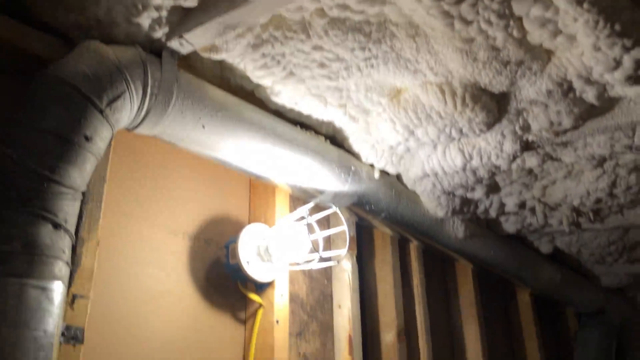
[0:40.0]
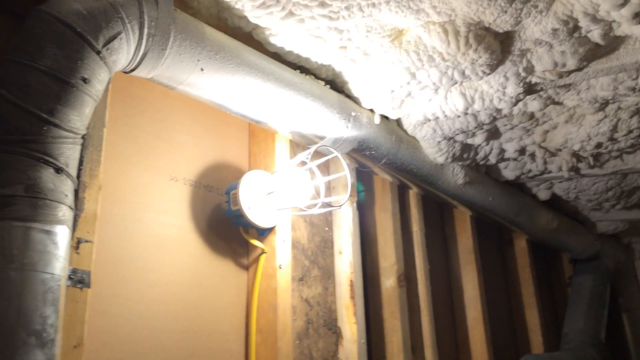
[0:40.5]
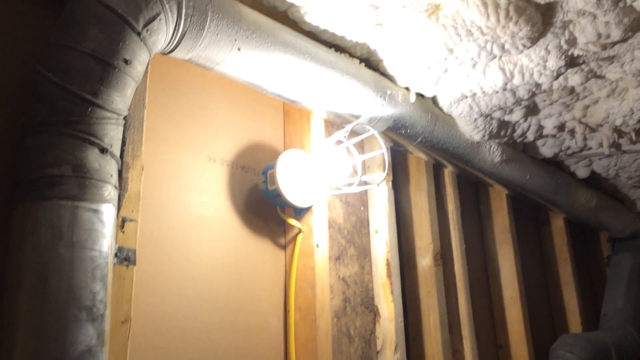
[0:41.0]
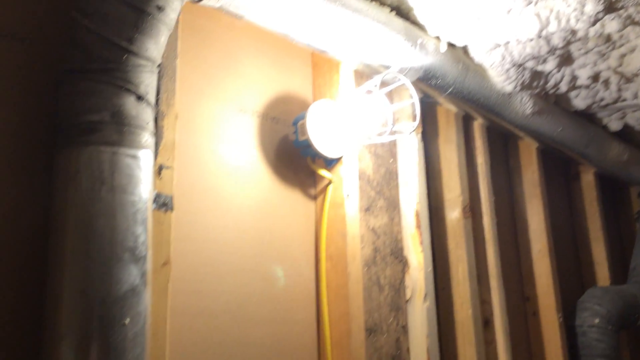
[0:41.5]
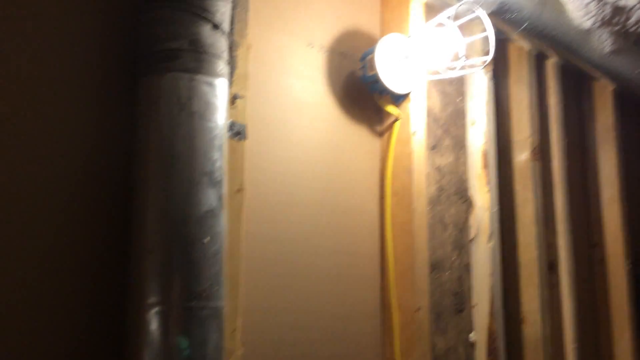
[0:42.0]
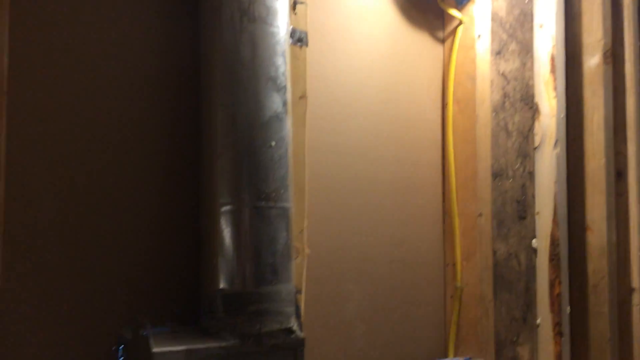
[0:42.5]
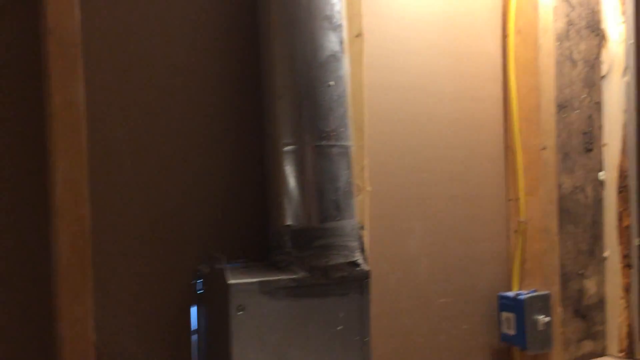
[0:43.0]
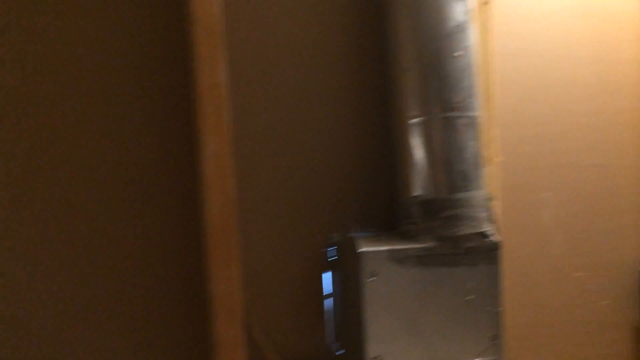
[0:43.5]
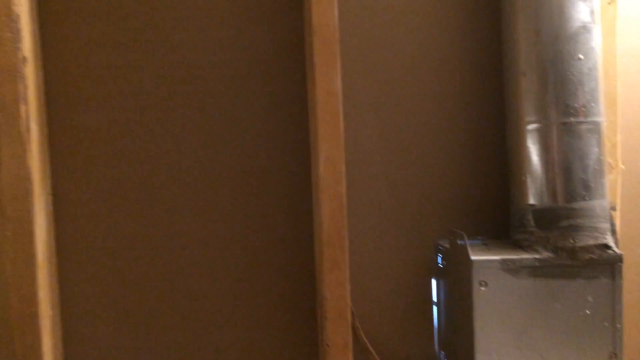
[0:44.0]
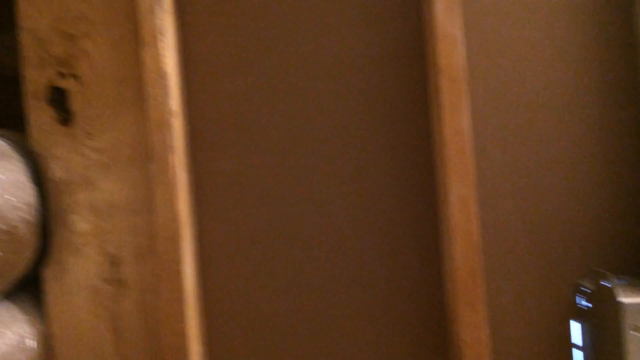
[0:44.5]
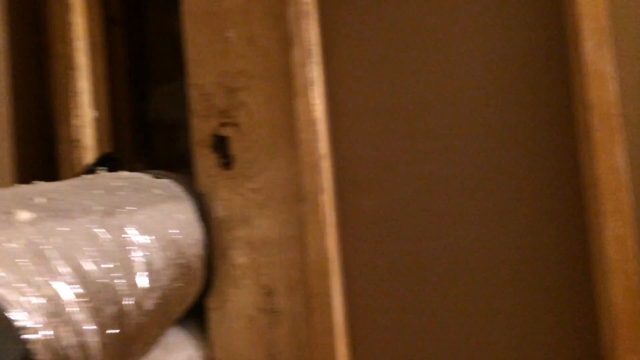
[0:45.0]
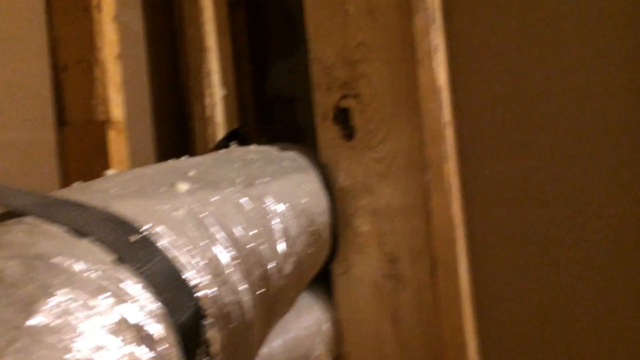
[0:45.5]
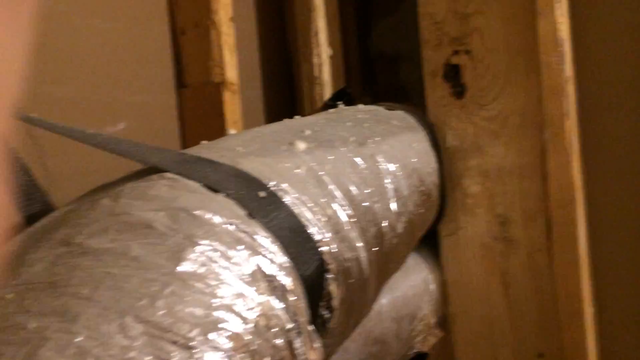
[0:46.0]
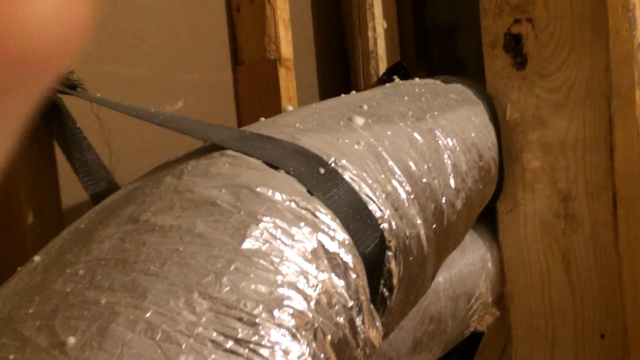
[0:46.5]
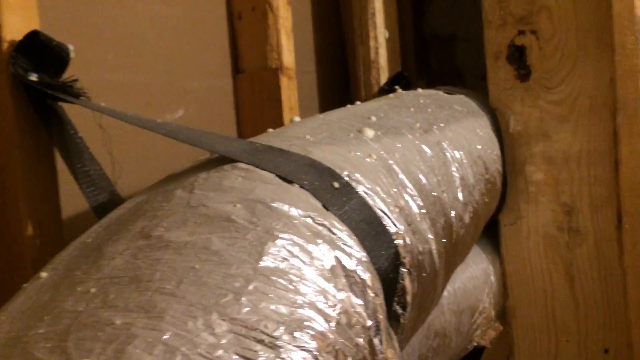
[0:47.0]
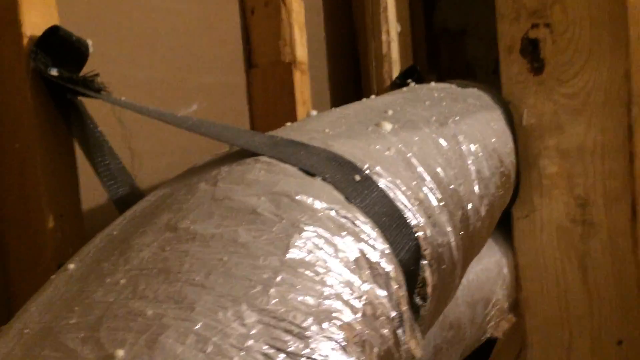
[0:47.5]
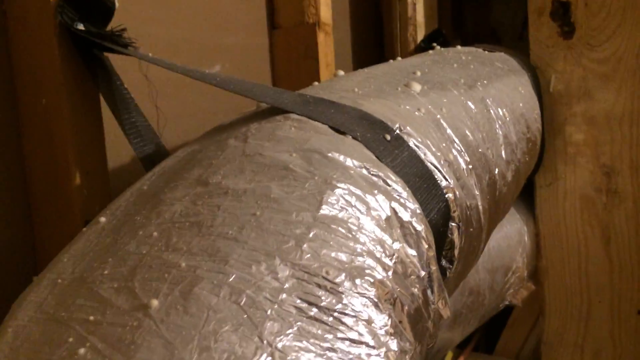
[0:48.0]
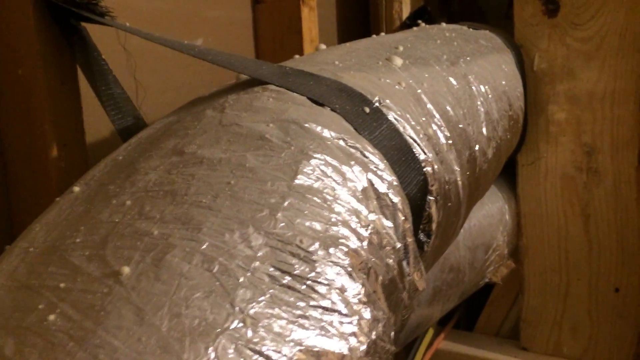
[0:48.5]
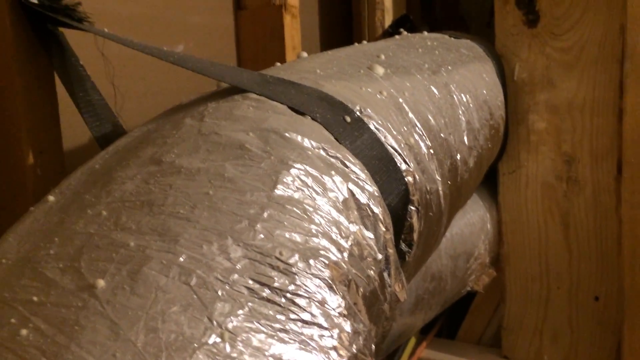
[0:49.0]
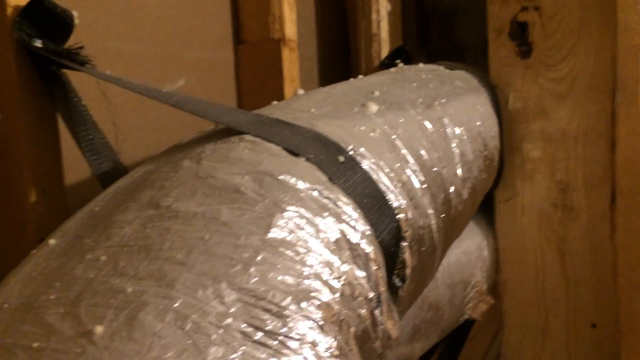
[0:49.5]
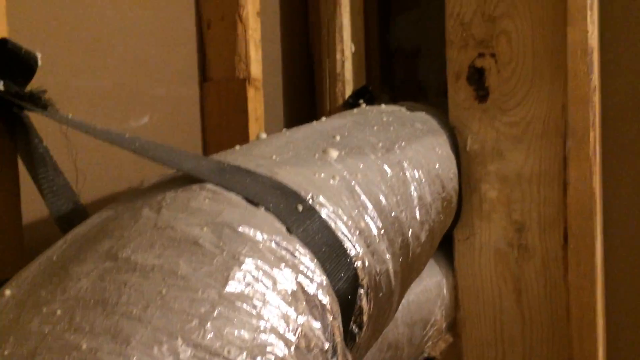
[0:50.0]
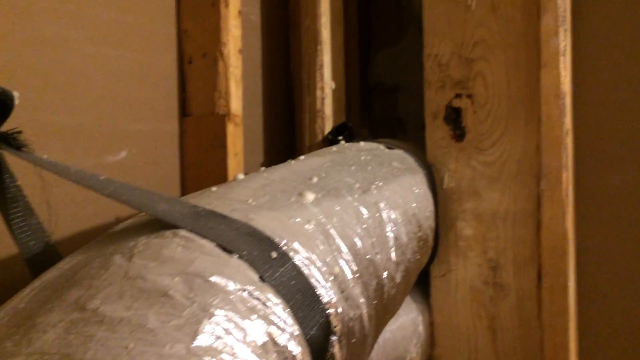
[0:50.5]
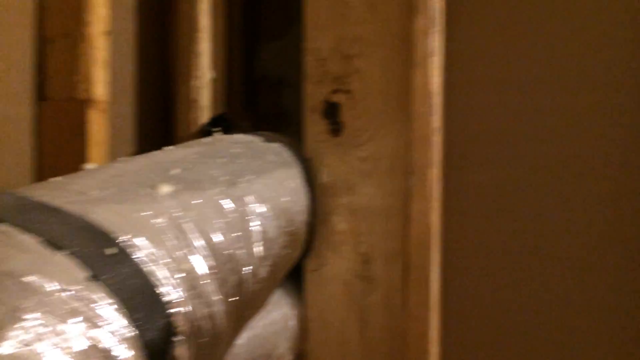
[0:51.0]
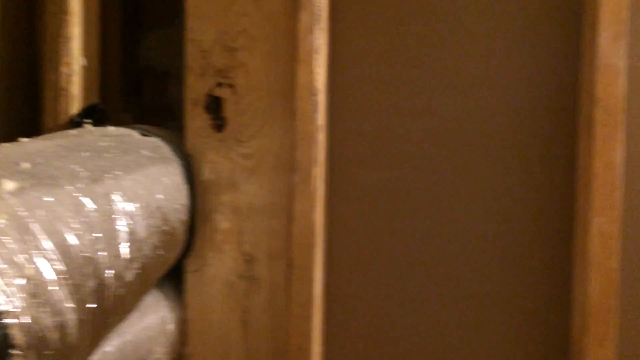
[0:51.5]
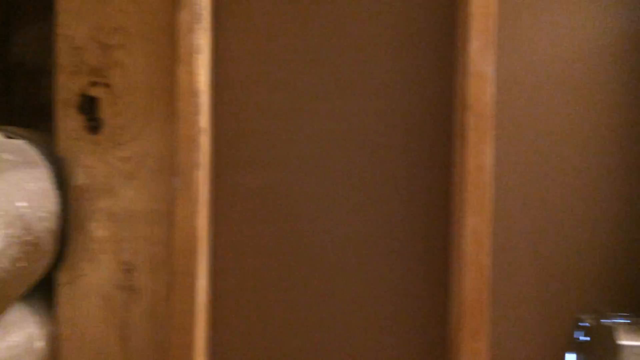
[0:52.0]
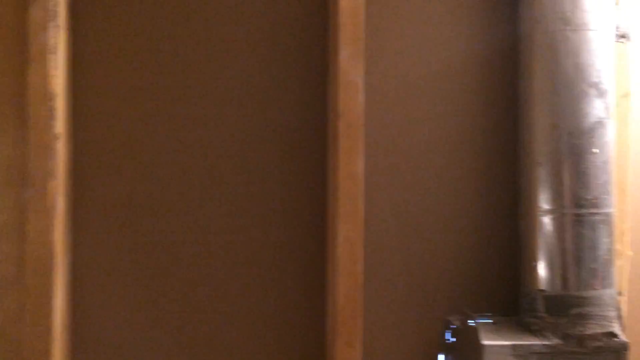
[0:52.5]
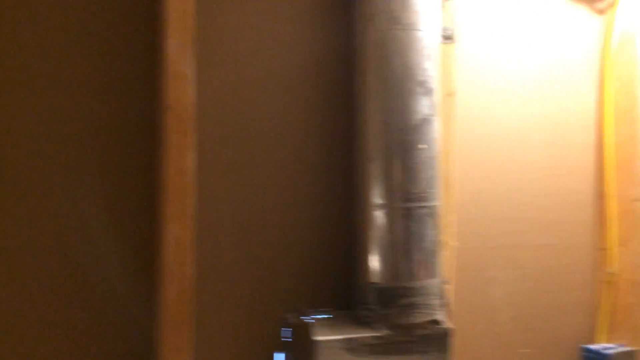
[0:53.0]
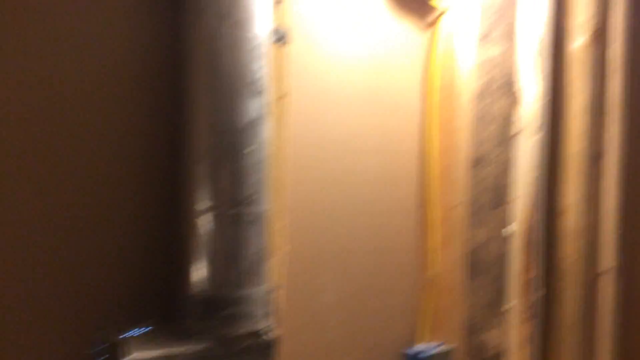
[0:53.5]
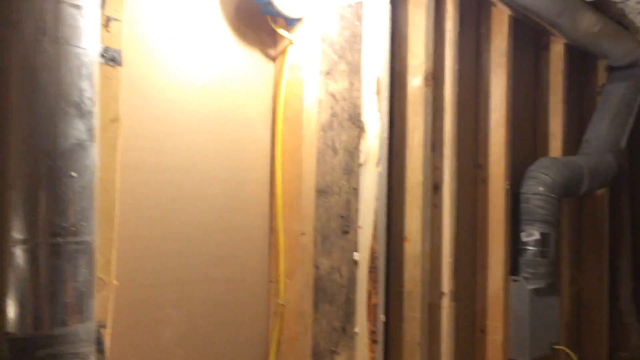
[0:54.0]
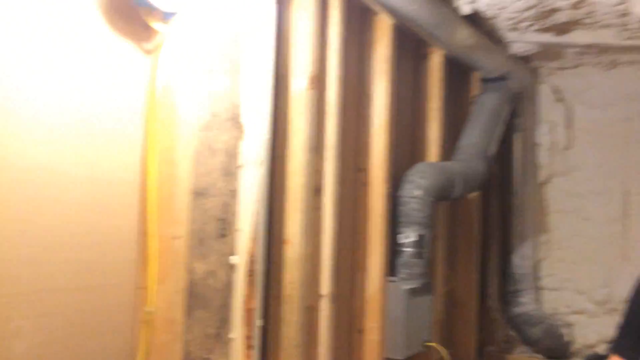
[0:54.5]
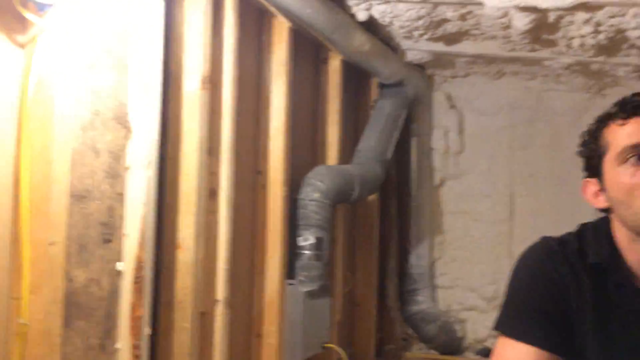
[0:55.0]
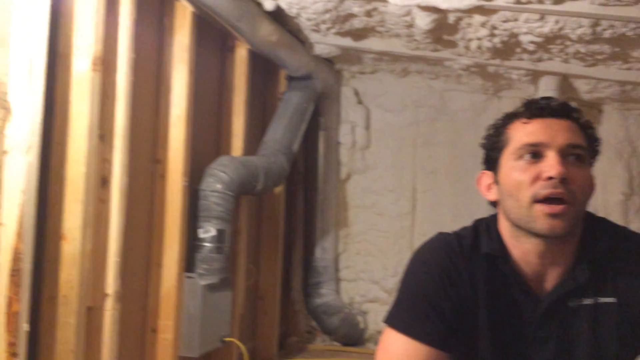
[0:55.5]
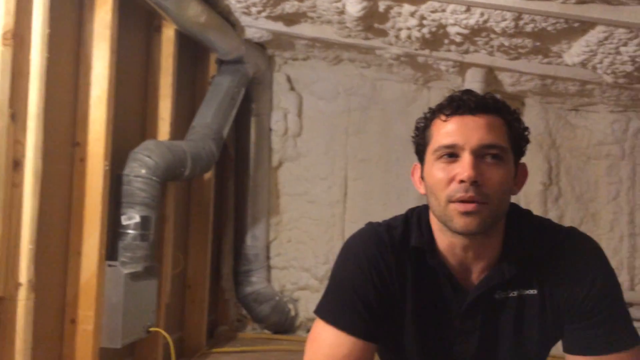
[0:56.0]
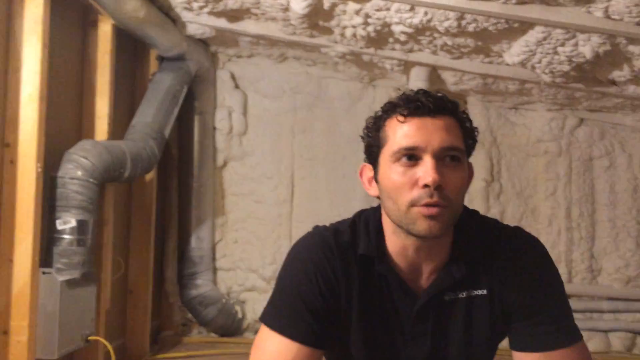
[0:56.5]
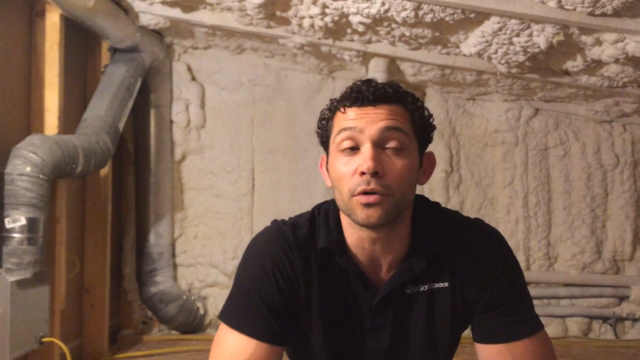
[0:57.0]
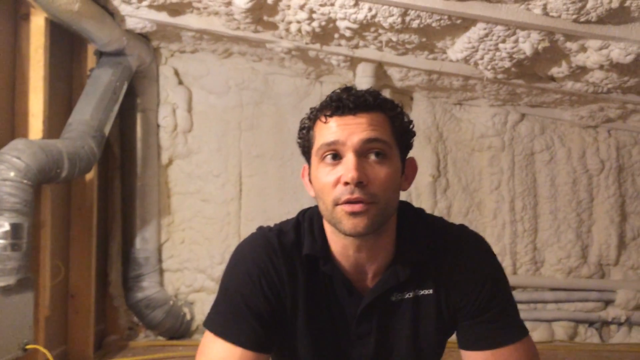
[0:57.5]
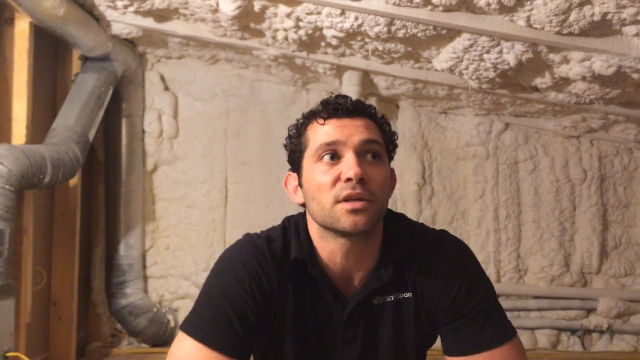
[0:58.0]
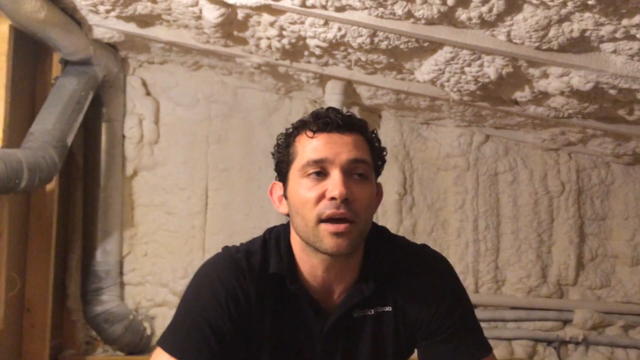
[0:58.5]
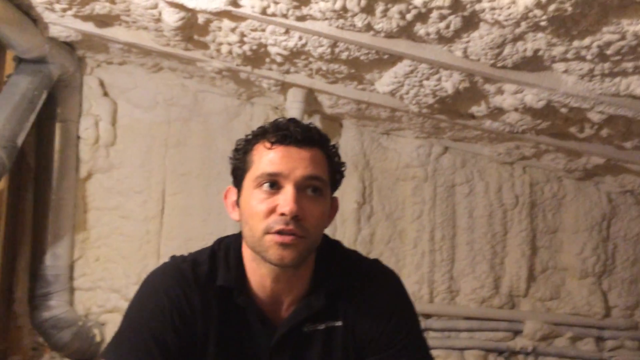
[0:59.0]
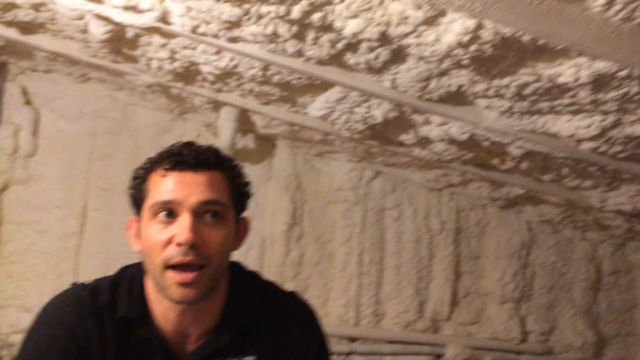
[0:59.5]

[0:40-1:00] The shot focuses on the piping systems. A pipe comes from the side and goes to the roof. A big pipe runs along the sideboard from one end to the other, and it seems to be the biggest pipe in the room. Another pipe goes from the middle to the roof, then bends all the way to the right end corner of the roof. There is a light bulb in the room.